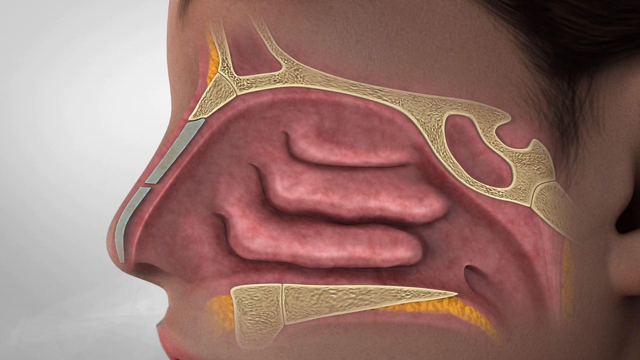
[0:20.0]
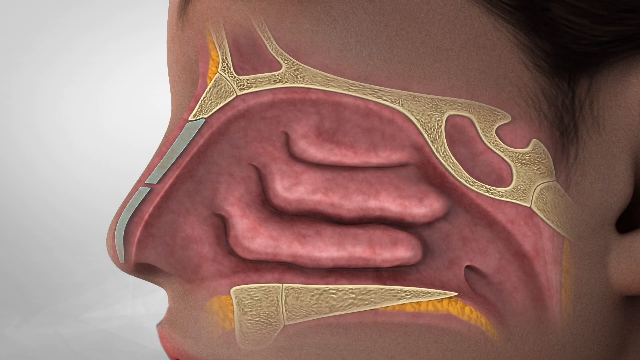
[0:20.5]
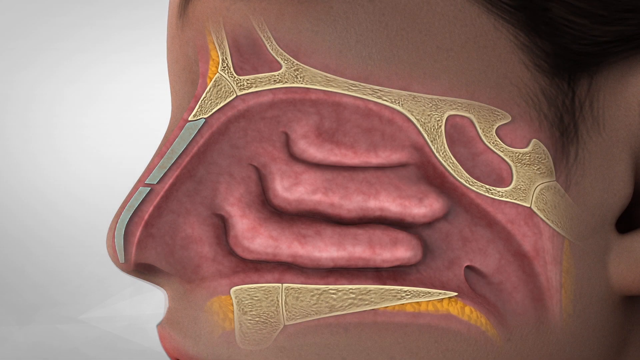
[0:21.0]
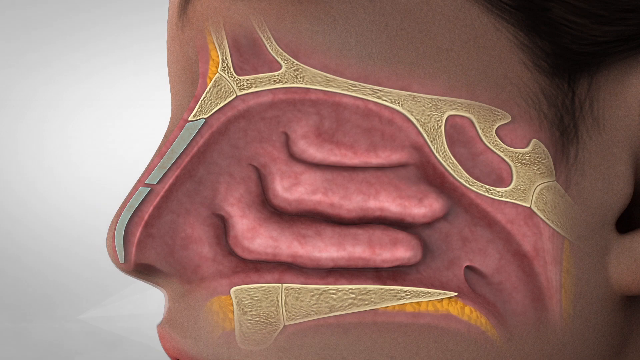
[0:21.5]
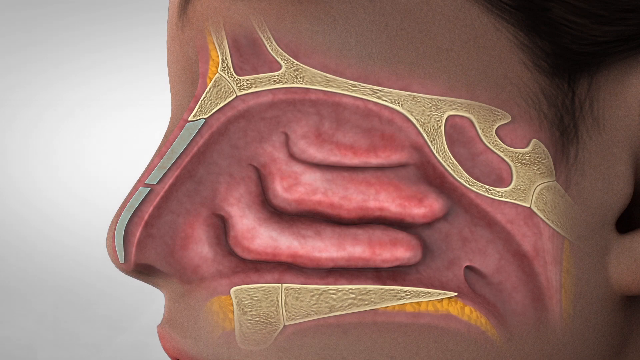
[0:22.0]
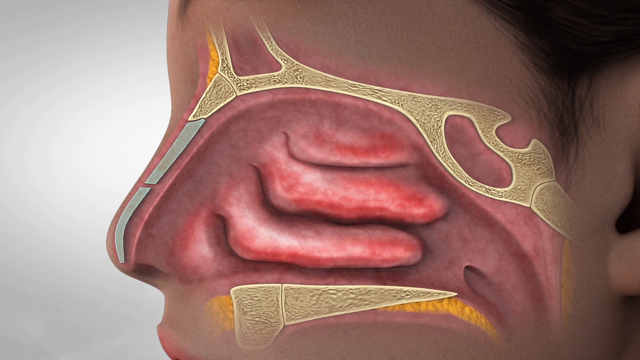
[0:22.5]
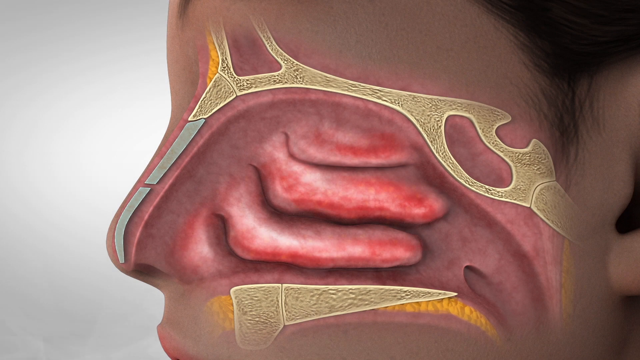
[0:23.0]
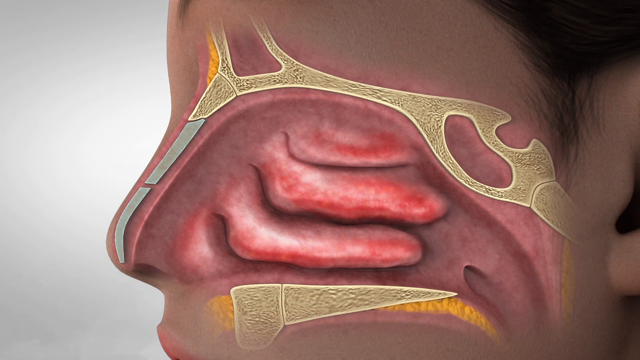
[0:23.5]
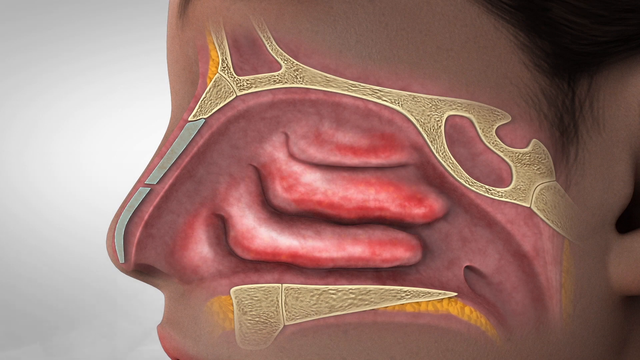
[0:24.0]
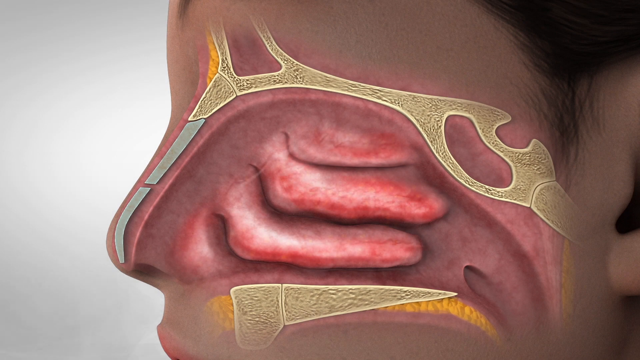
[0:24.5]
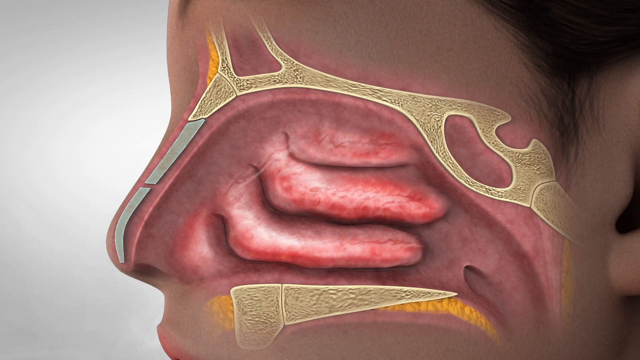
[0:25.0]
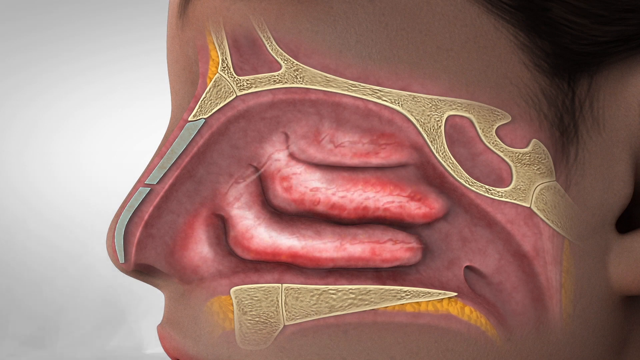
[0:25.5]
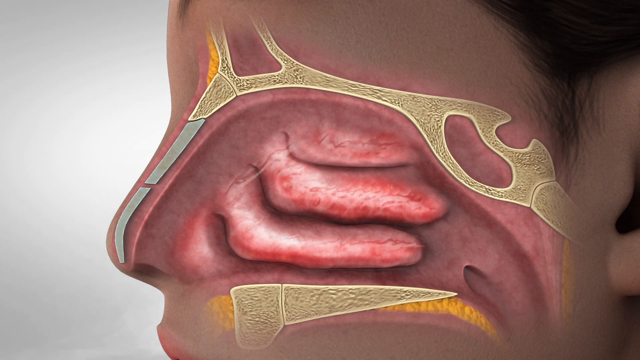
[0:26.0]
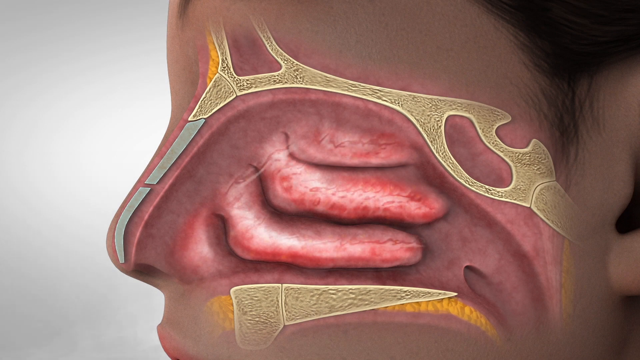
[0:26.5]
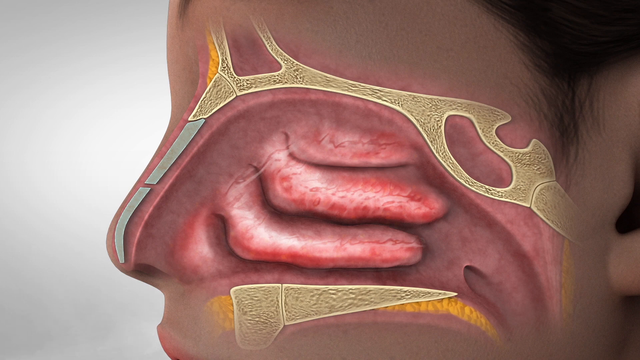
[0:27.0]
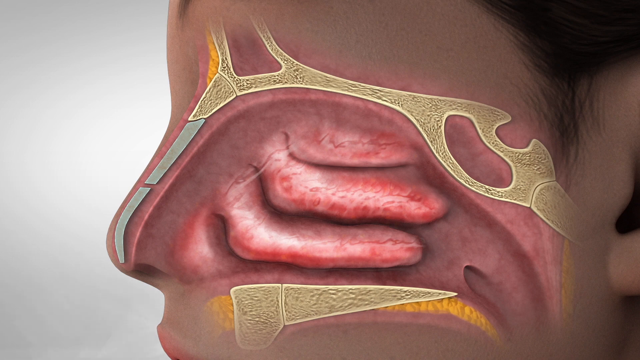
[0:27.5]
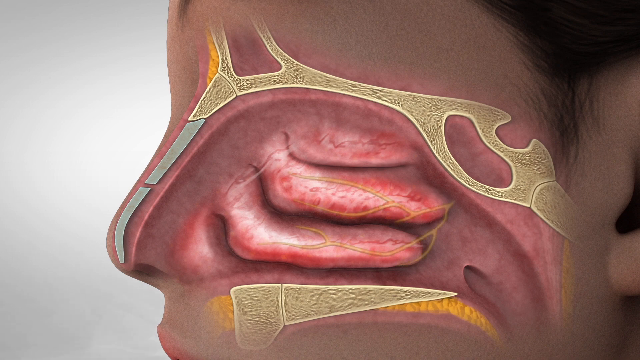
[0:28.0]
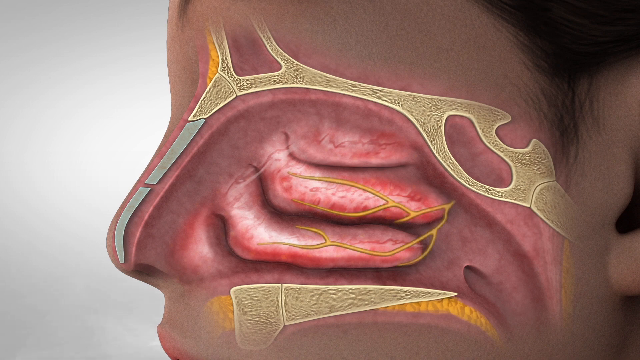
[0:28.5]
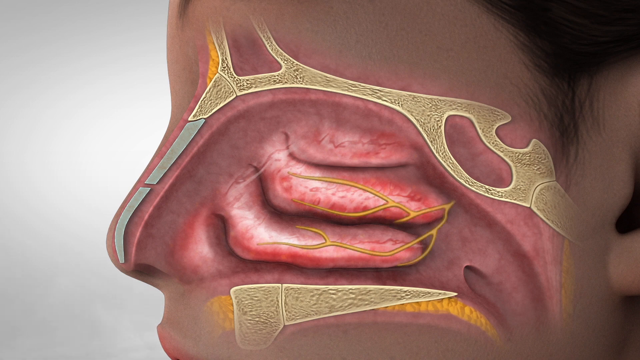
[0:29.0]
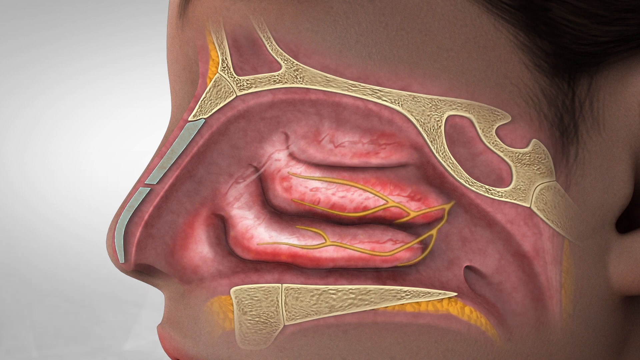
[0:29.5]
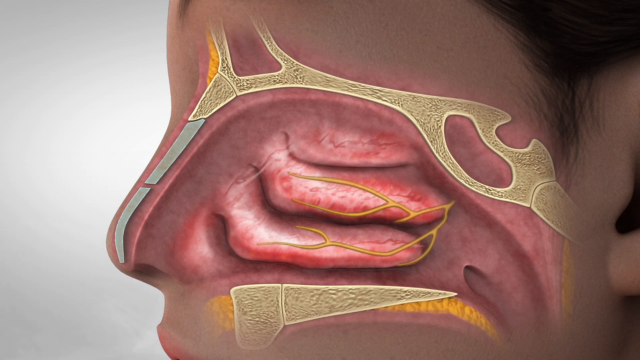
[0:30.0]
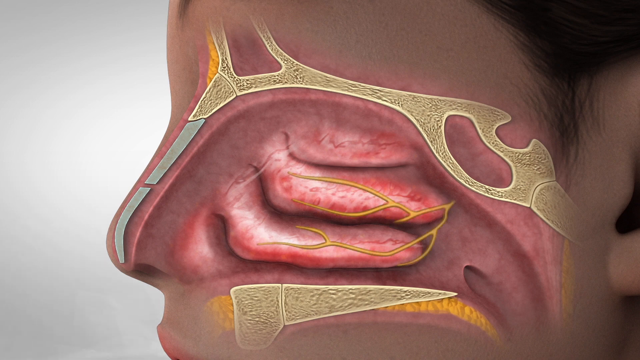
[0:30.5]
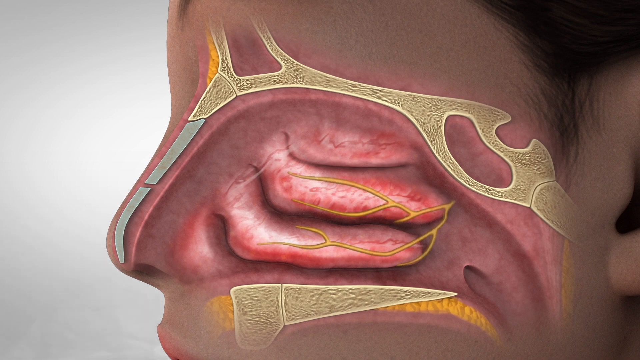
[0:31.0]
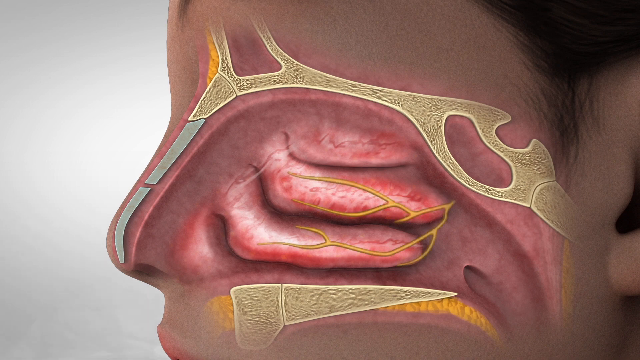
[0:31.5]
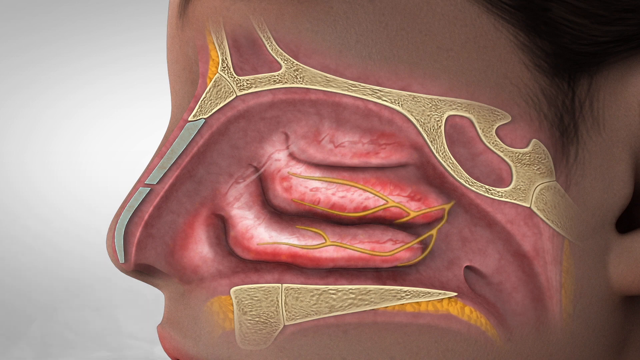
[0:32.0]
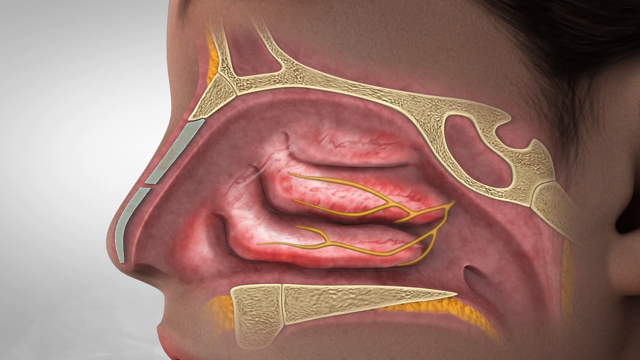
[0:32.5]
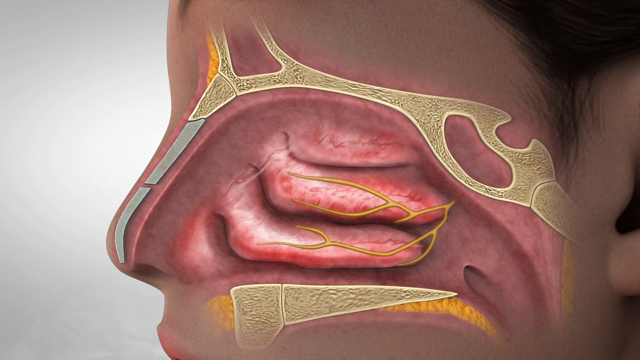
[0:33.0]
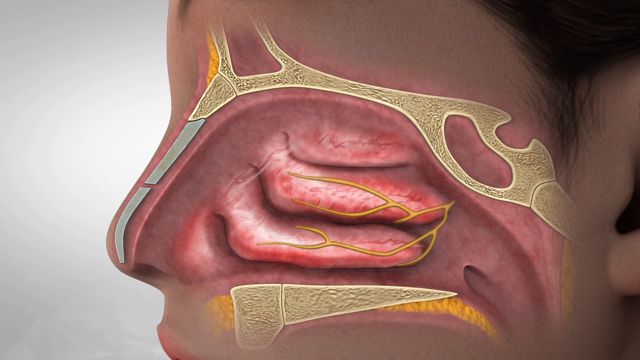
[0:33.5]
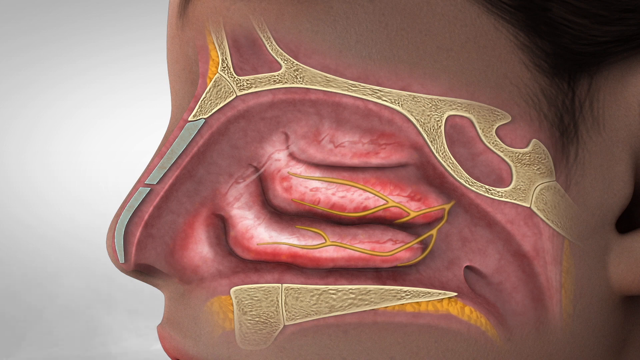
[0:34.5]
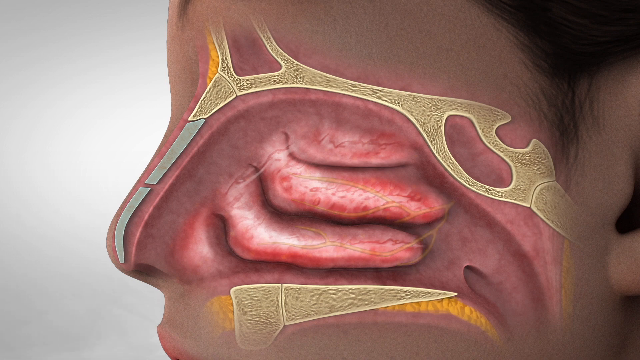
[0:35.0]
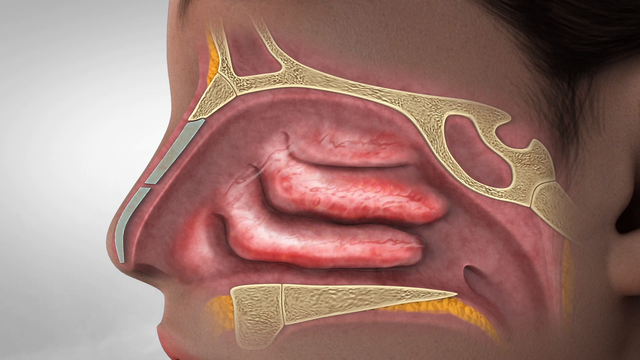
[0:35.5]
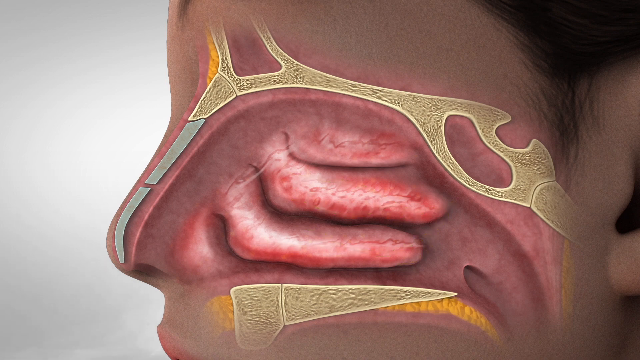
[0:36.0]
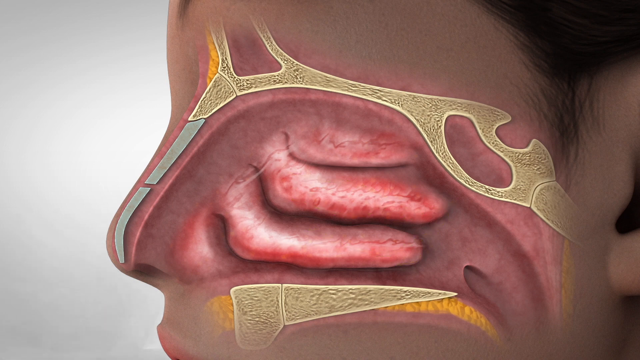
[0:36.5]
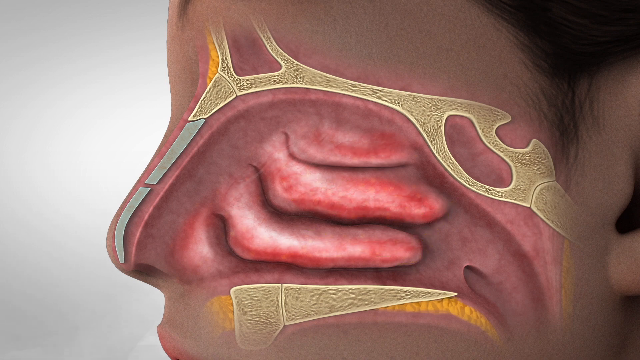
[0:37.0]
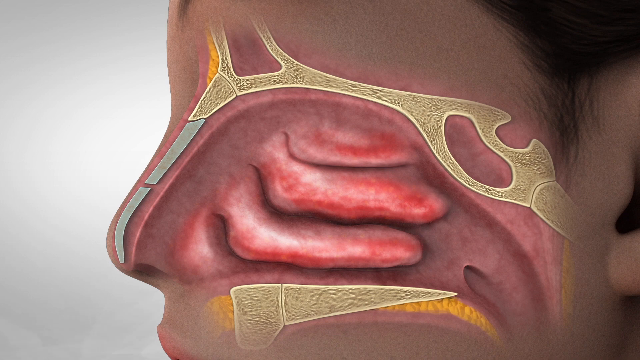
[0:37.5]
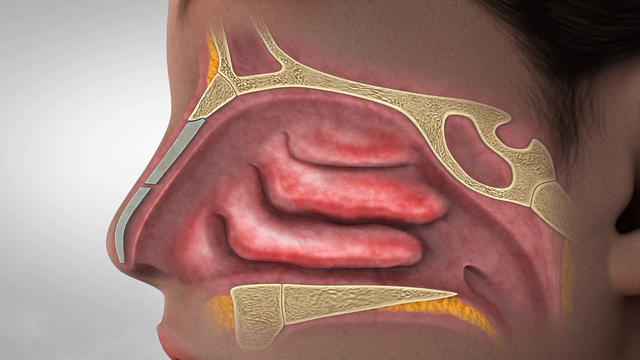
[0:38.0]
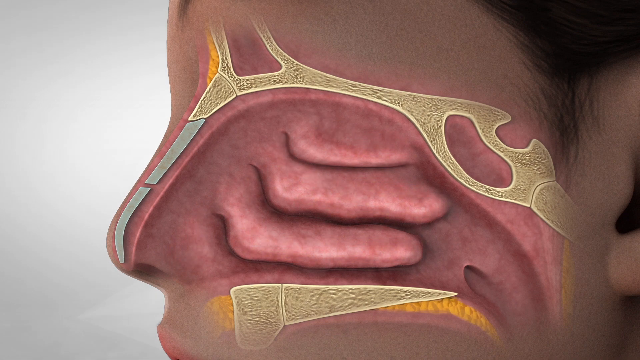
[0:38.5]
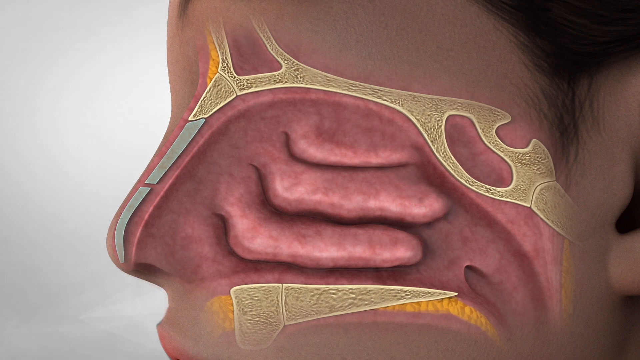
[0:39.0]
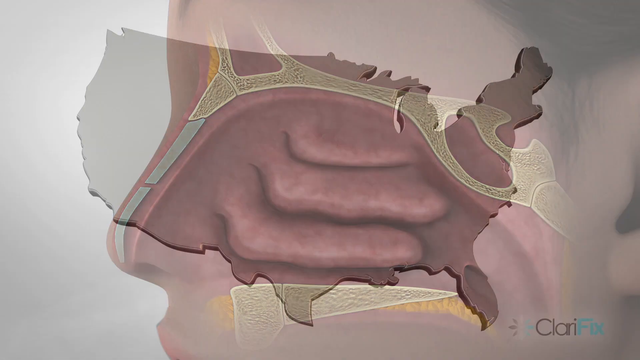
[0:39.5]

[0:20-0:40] On a gray background is the CGI side profile of a woman's face. She has light skin; part of her ear, a dark sideburn and, at the top, part of a dark eyebrow are visible. The inside of her face is overlaid onto her actual face. Four sections in her face almost look like sausages; they turn redder and then lighter in color. Yellow lines that look like veins, vessels or some kind of pathways then show up over the two middle sections, and then disappear. The sausage shapes turn red again and then return to their original, normal pink color. The view then zooms in, and suddenly a gray map of America appears.